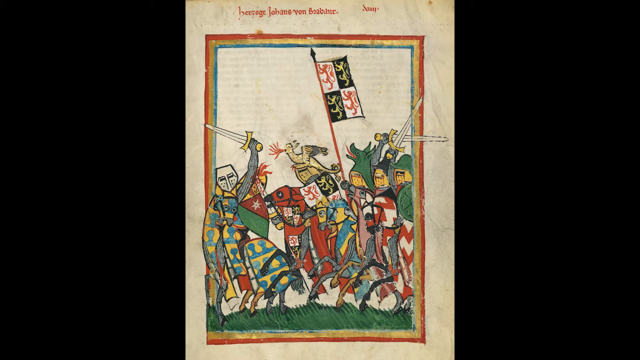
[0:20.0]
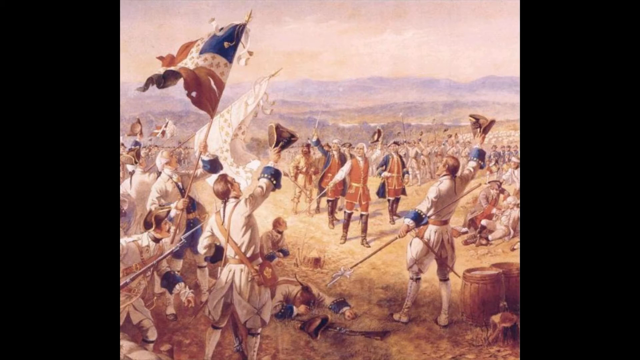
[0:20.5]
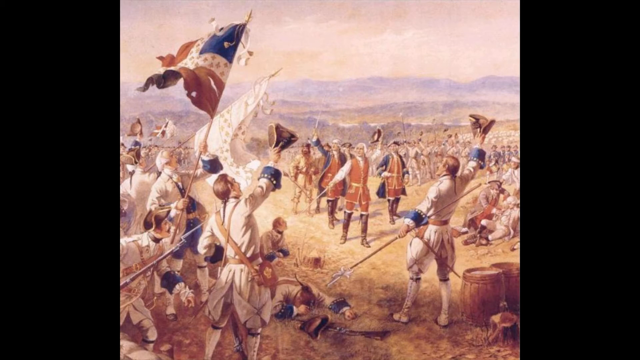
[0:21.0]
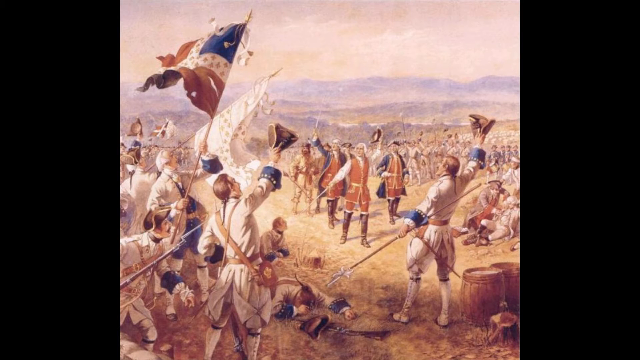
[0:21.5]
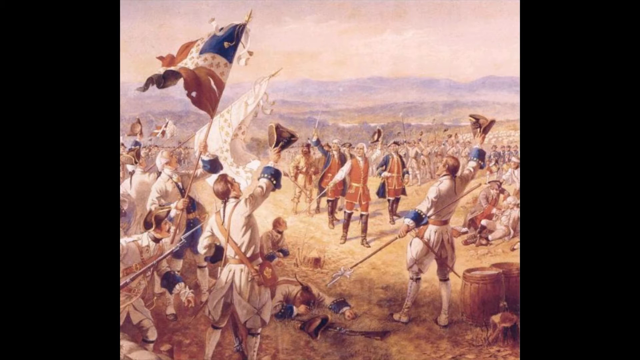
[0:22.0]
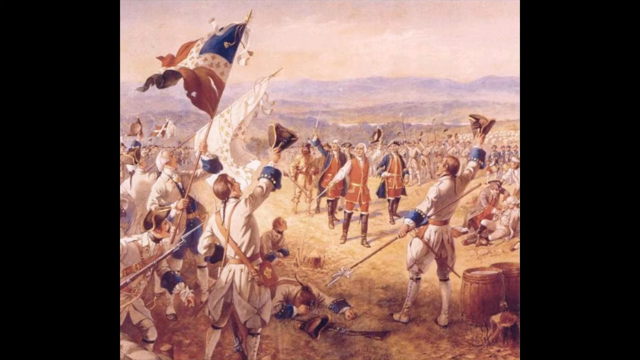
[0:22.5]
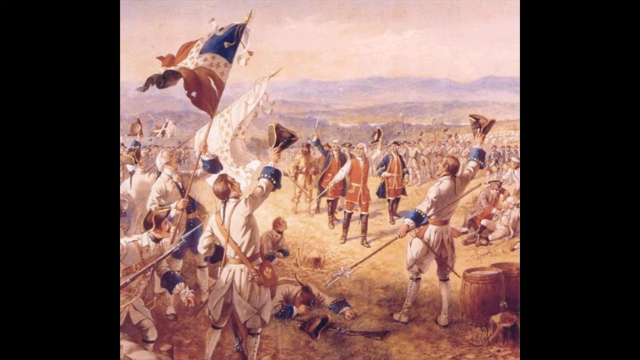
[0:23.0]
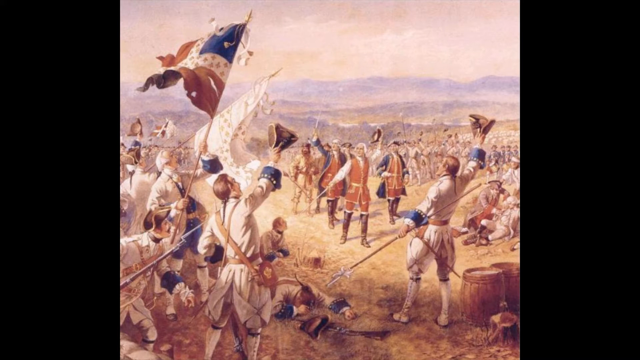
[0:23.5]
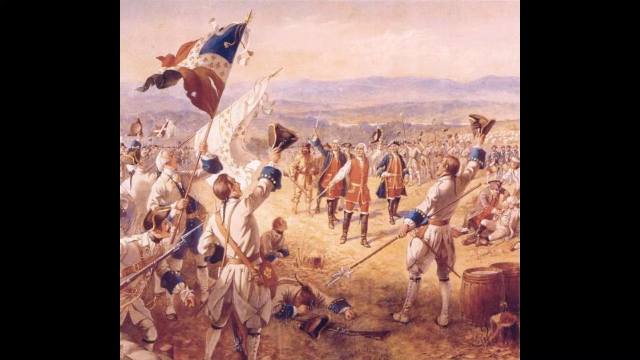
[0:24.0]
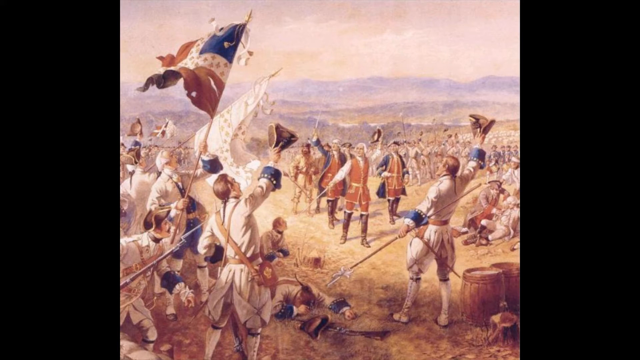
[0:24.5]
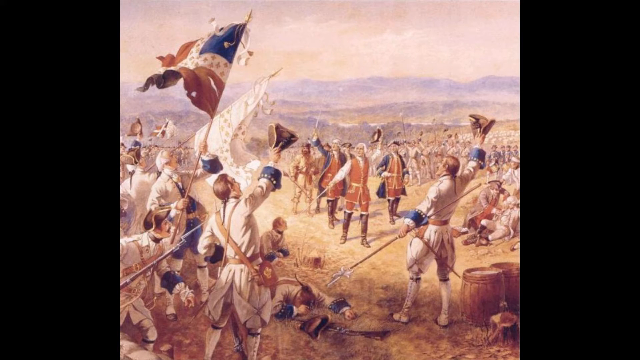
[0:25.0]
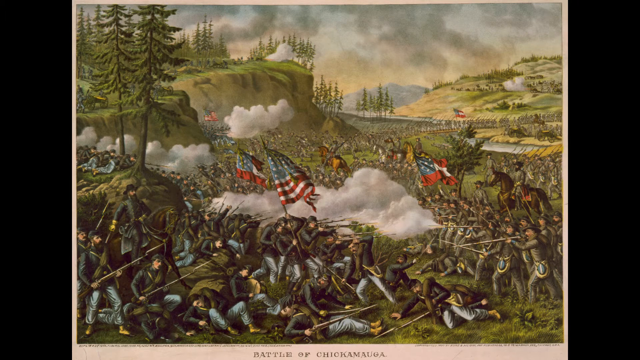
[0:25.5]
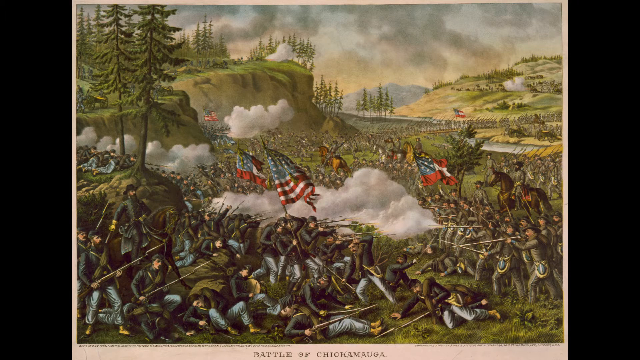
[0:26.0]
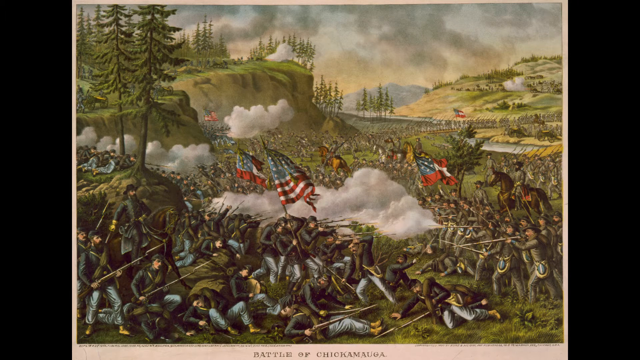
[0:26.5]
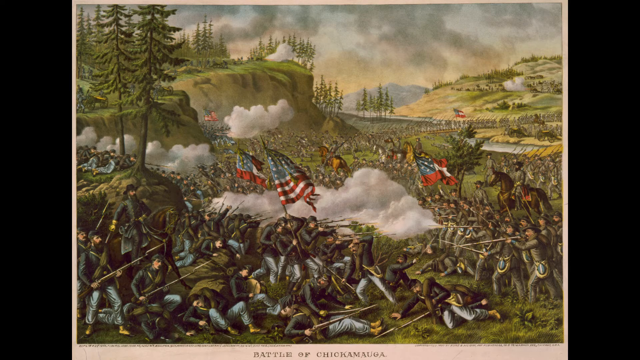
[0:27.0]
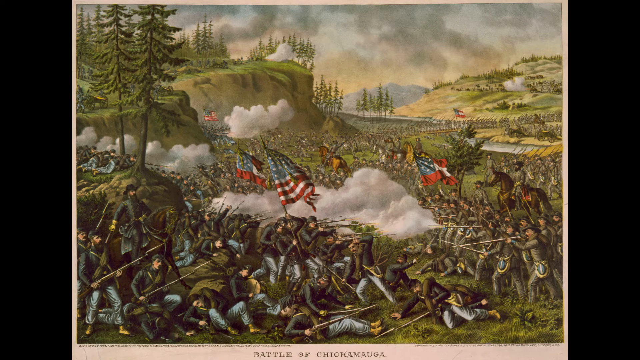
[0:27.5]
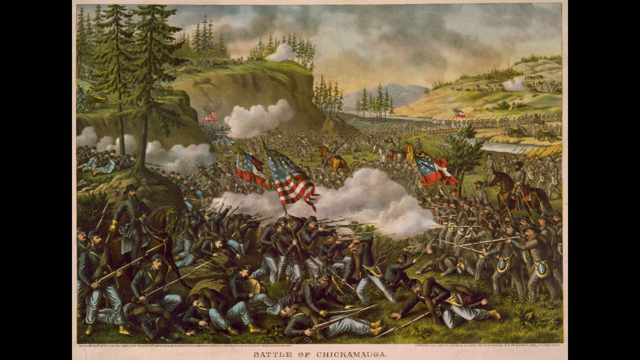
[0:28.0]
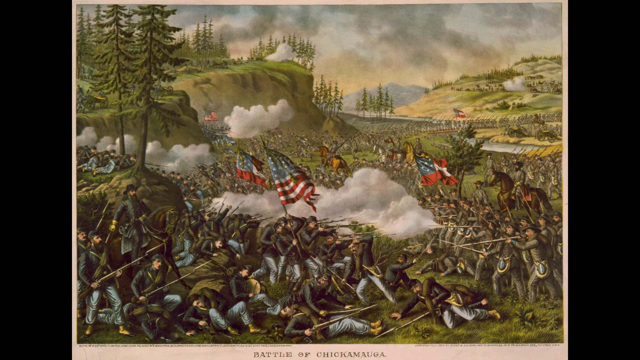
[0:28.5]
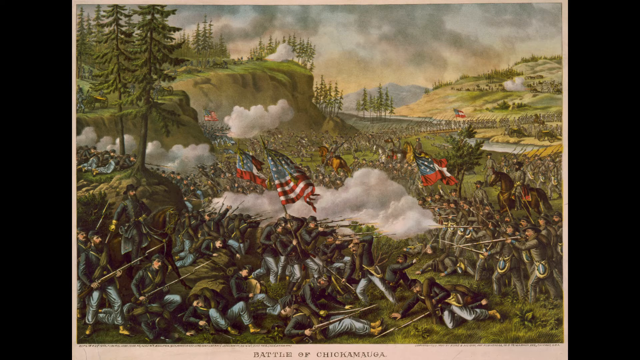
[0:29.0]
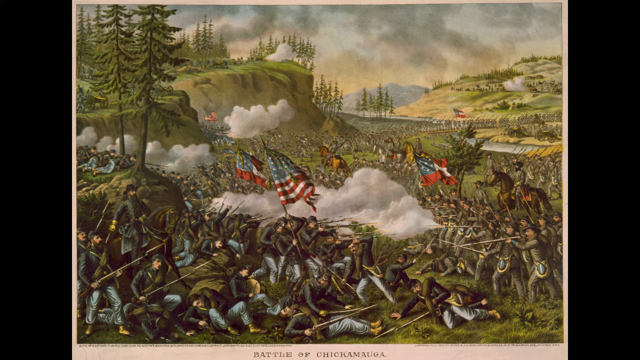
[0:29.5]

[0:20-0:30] After the medieval battle illustration, a painting of a different battle appears, presumably a more recent one, possibly the Revolutionary War, though it is not clear. In the center, a figure who looks kind of like George Washington is taking his hat off; he wears tall knee-high boots, a white shirt and a red and gold vest, with several soldiers around him. The soldiers on the left appear to wear white and yellow, with blue collars on their shirts, and those in the background may be dressed the same, though it is hard to tell. There are mountains, and a figure on the left holds a tall flag. Another shot shows a different battle: a crowd of people in a green landscape shooting musket rifles, with smoke billowing and flags in the air. Hills, trees, grasses and cliffs are visible in the back.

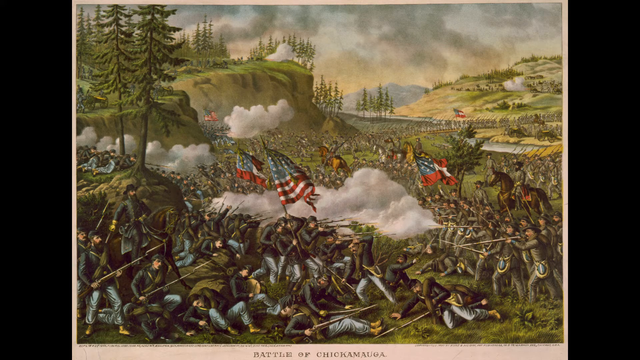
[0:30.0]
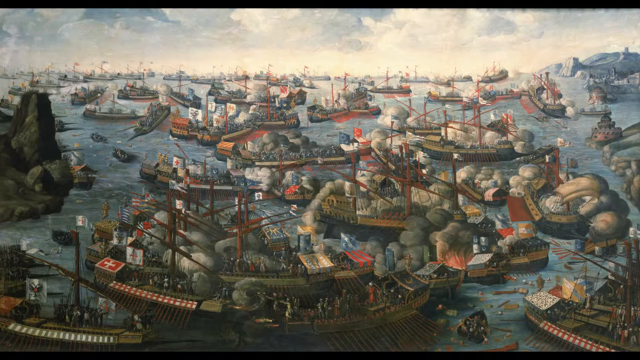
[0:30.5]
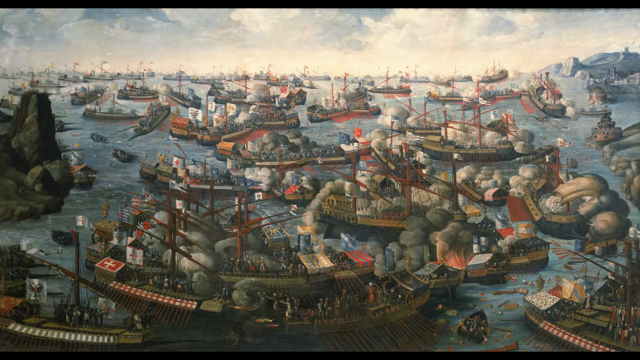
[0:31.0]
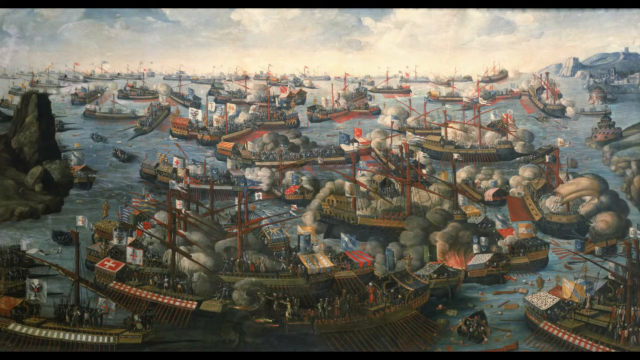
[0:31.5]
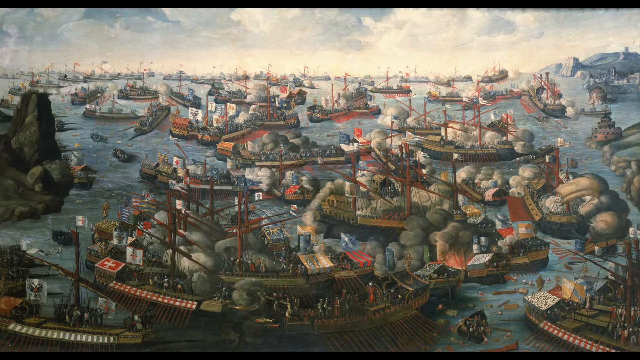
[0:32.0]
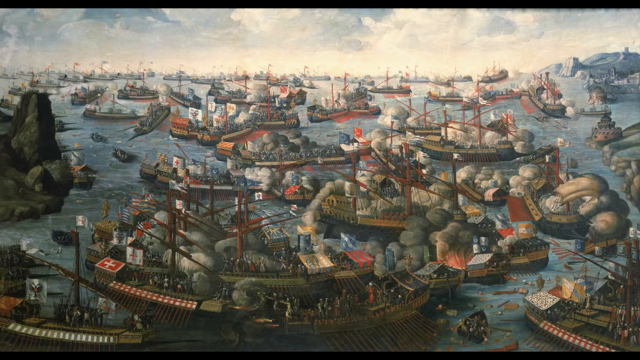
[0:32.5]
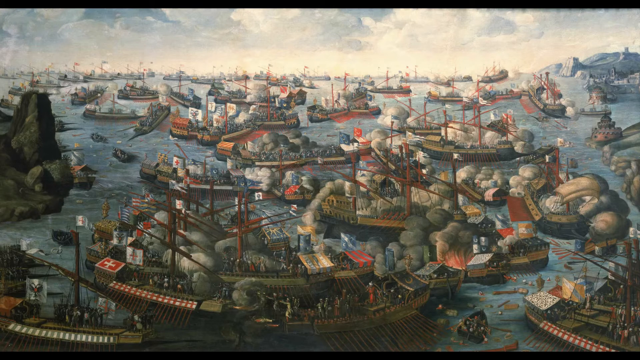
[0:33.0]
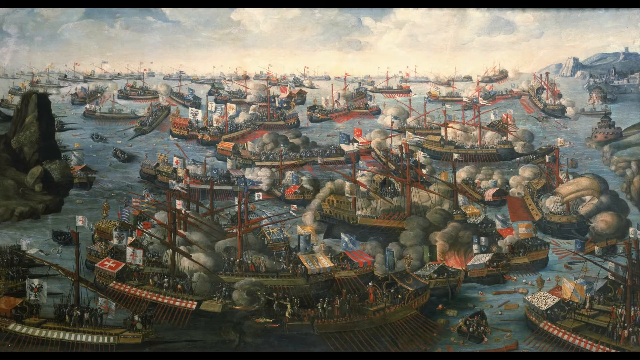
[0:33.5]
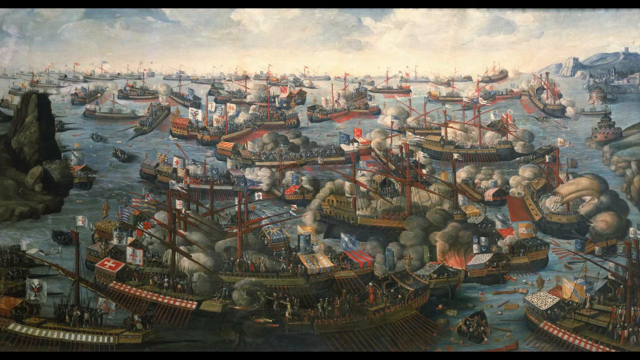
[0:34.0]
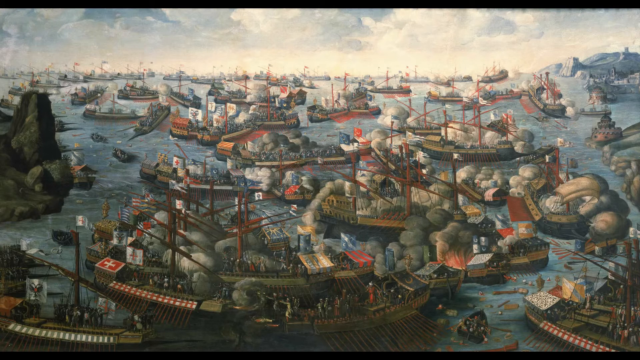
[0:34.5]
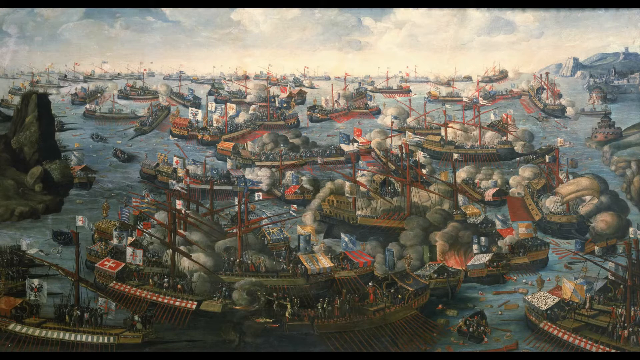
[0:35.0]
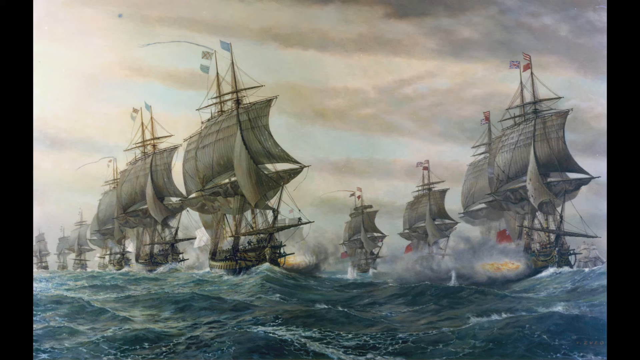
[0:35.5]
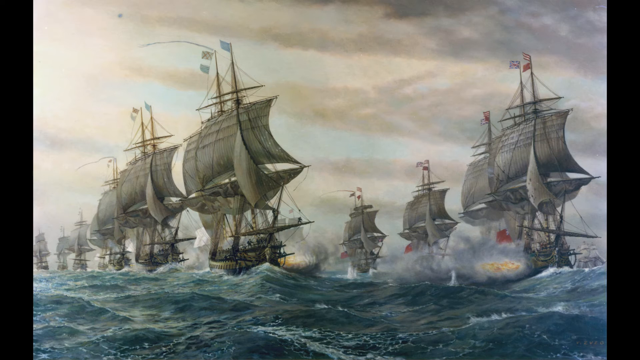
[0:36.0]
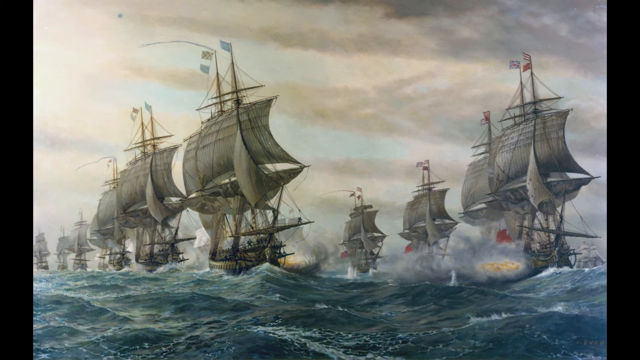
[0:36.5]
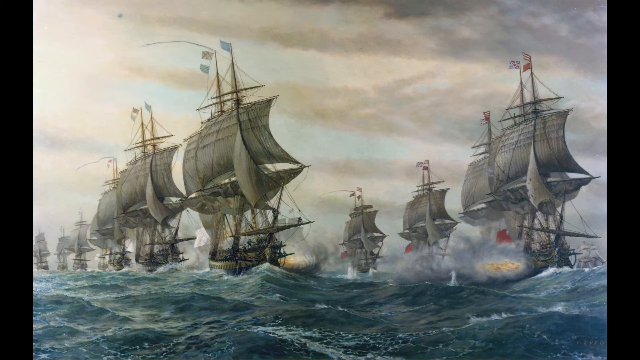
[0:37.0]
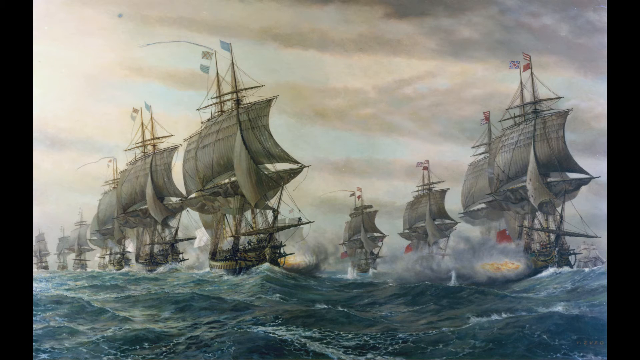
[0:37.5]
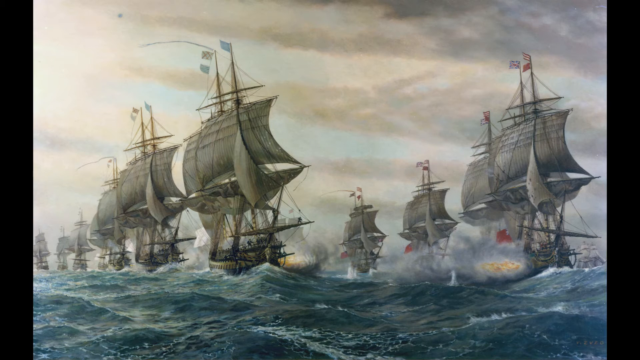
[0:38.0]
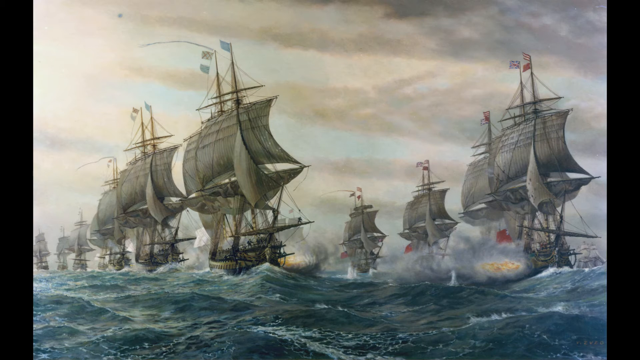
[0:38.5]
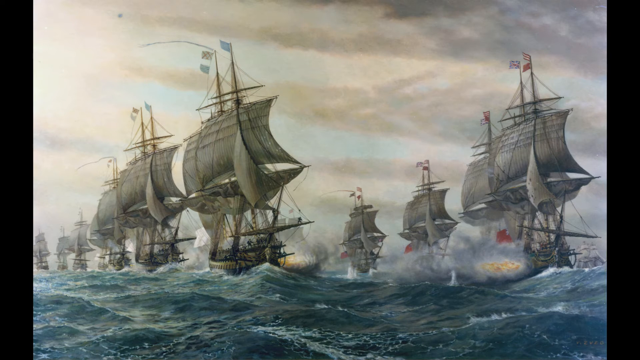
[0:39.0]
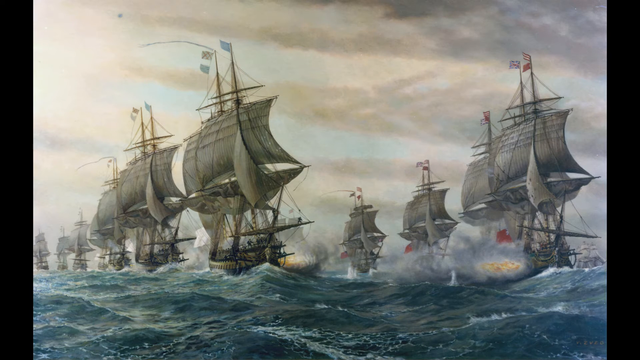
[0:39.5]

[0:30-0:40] A painting shows a battle taking place in a very green landscape. Next is a battle at sea, with dozens of ships crammed onto the ocean under a sky full of puffy clouds. The ships look like they are full of cargo, though it is hard to tell since some are small in the distance. There are rocks on the left side, and there might be smoke and possibly people on the boats, but the painting is very crowded. The water is blue. Another shot shows what looks like a naval battle: rows of ships with large billowing sails shooting cannons at each other, with fire and smoke bursting from their sides. The water beneath them ripples with tumultuous waves, and the sky above is cloudy.